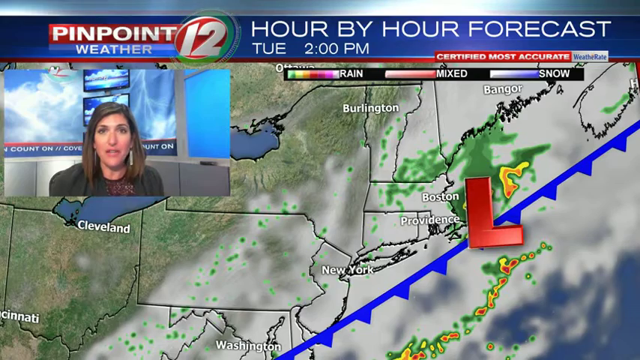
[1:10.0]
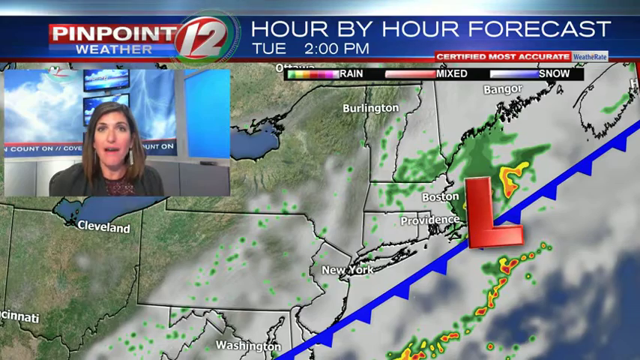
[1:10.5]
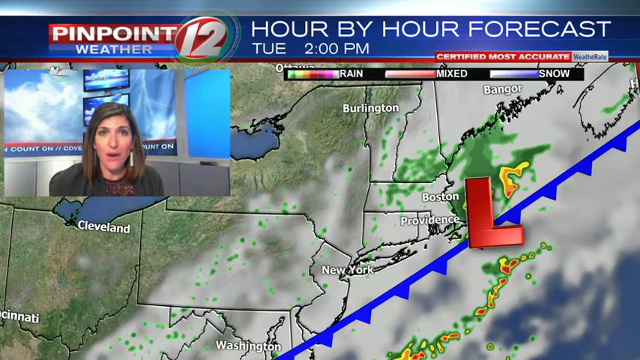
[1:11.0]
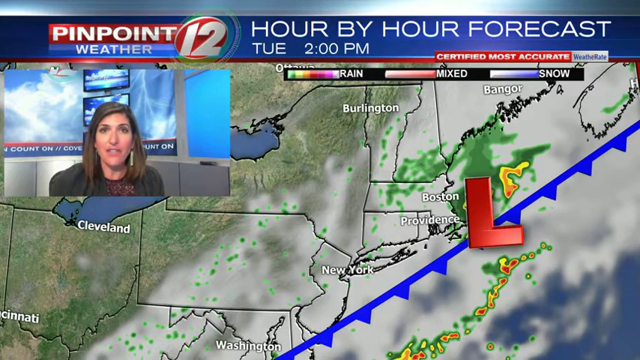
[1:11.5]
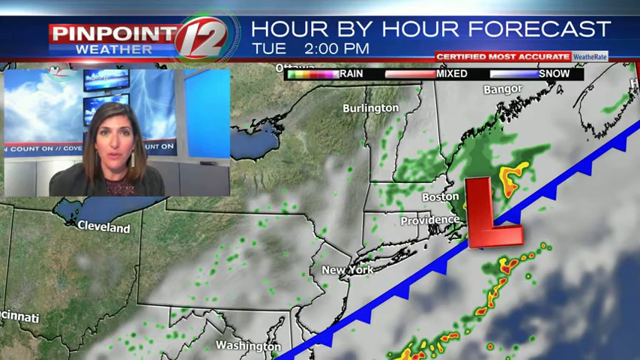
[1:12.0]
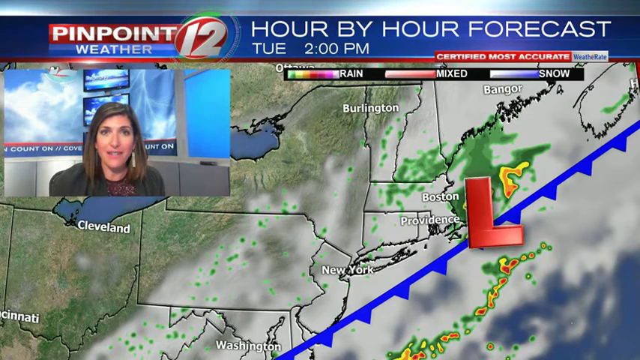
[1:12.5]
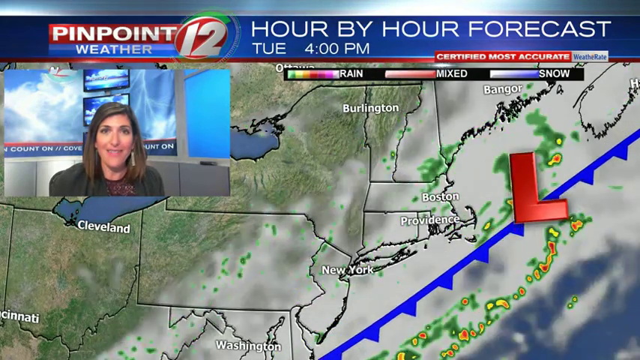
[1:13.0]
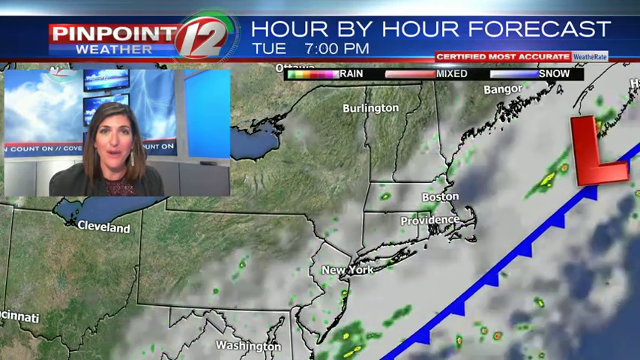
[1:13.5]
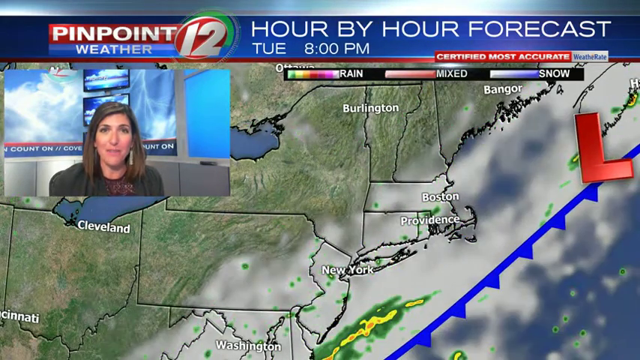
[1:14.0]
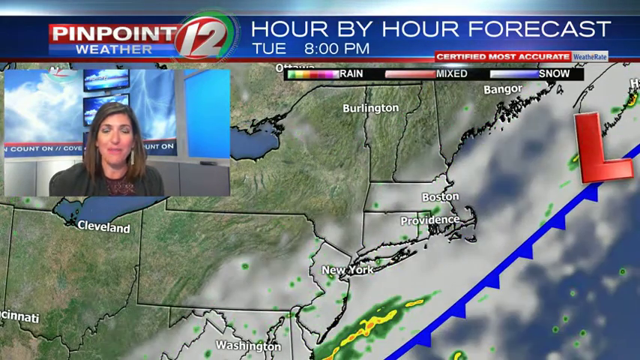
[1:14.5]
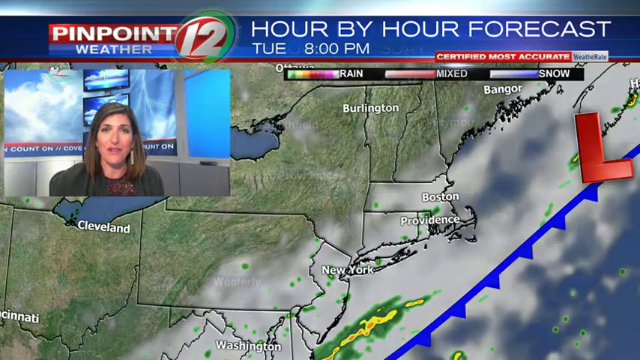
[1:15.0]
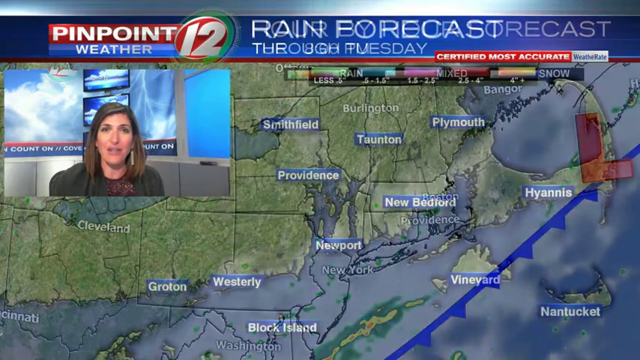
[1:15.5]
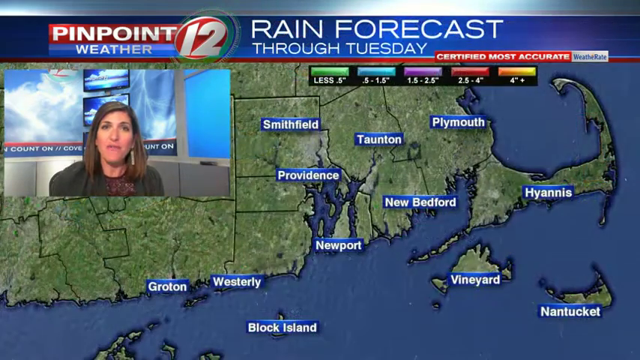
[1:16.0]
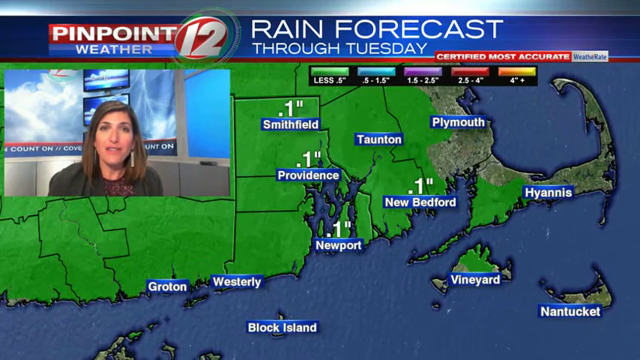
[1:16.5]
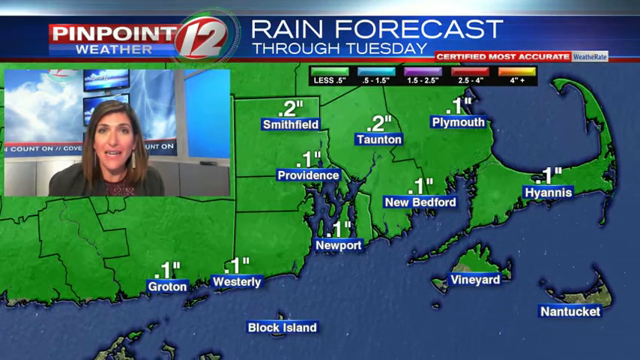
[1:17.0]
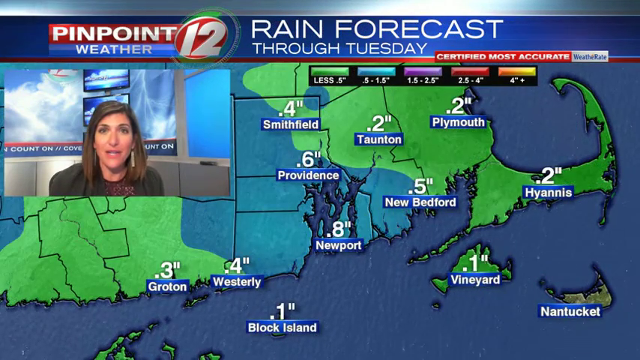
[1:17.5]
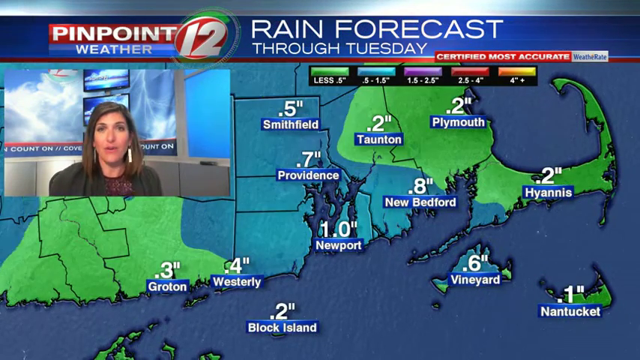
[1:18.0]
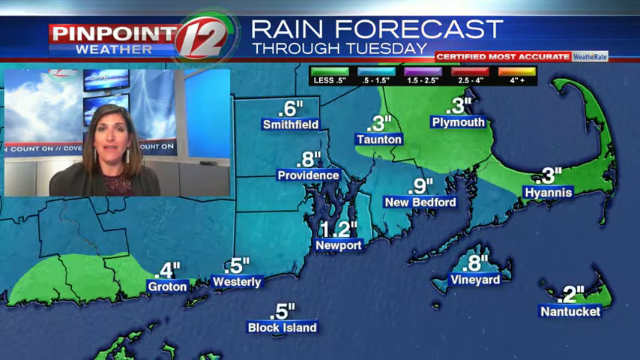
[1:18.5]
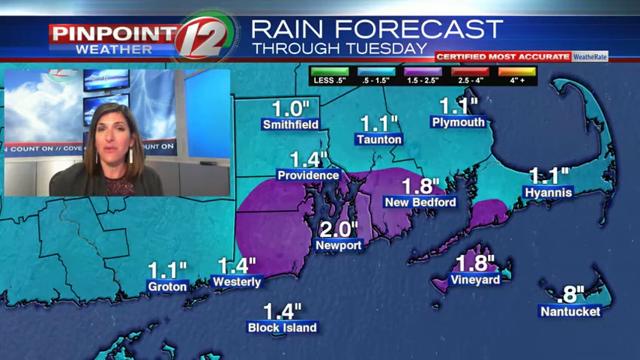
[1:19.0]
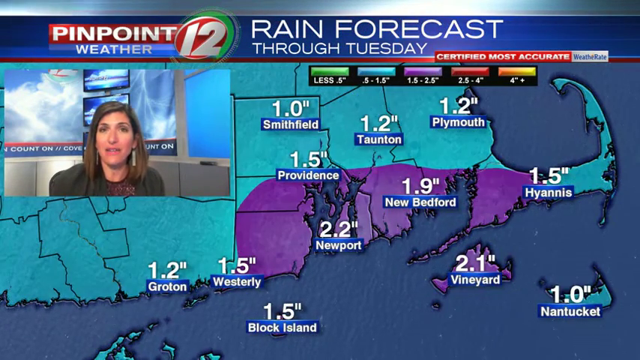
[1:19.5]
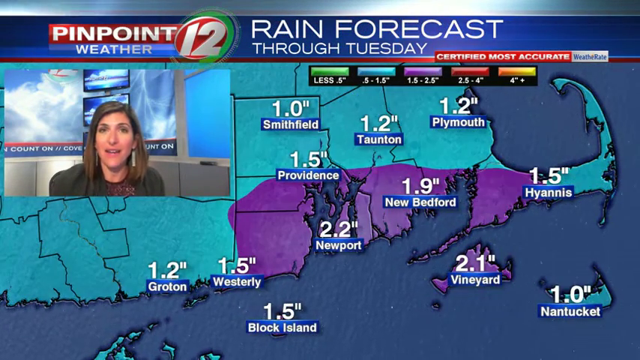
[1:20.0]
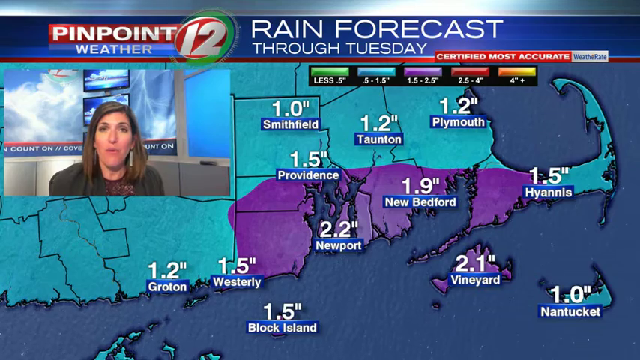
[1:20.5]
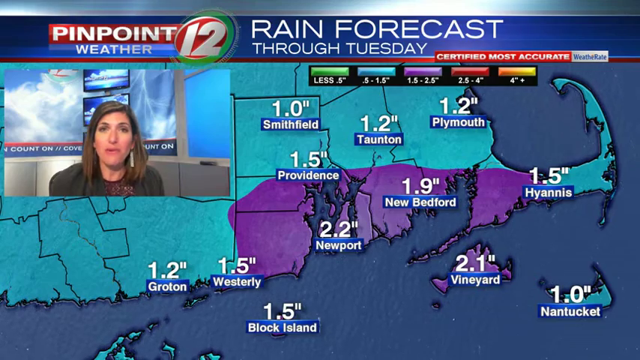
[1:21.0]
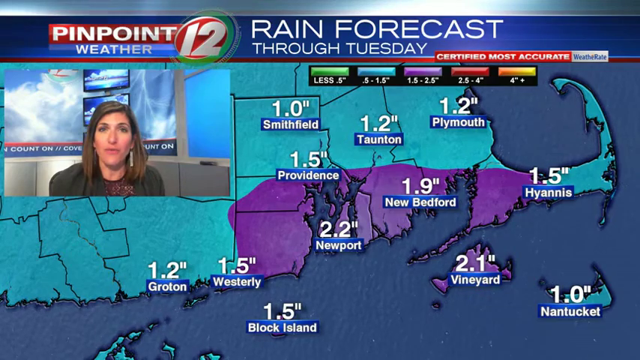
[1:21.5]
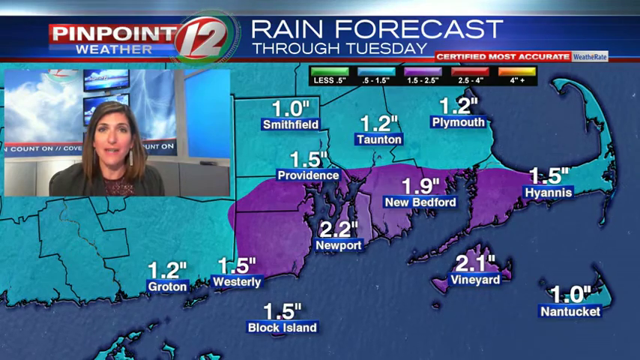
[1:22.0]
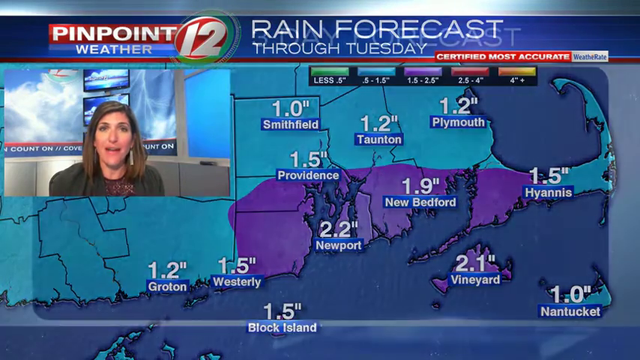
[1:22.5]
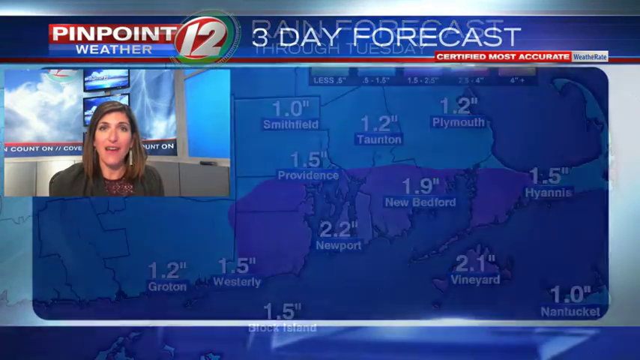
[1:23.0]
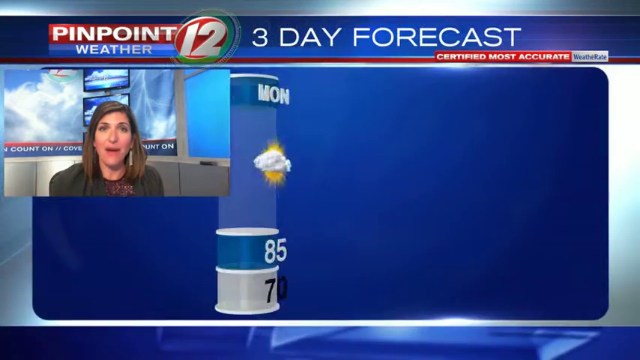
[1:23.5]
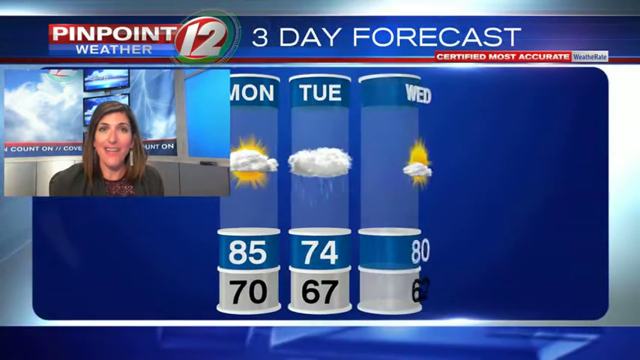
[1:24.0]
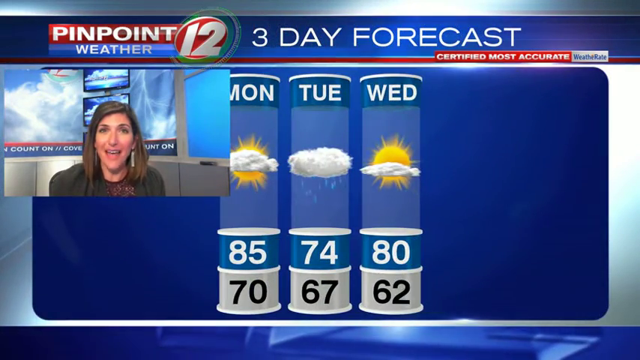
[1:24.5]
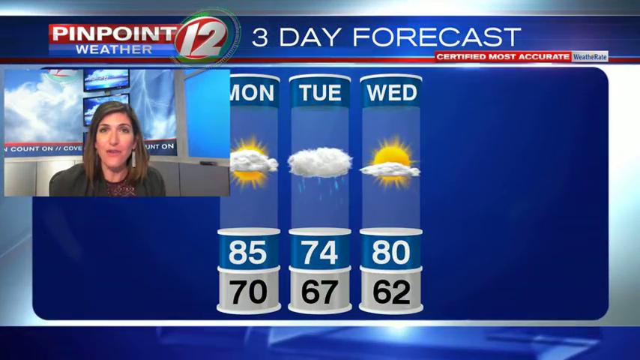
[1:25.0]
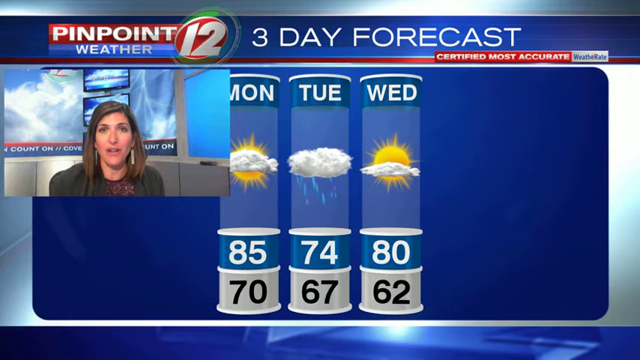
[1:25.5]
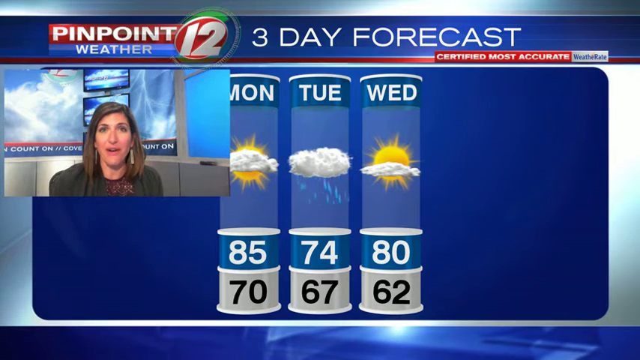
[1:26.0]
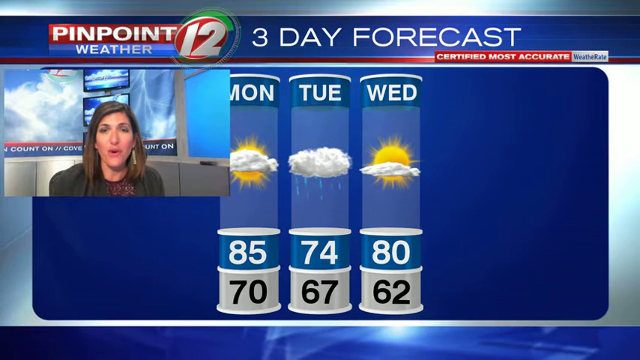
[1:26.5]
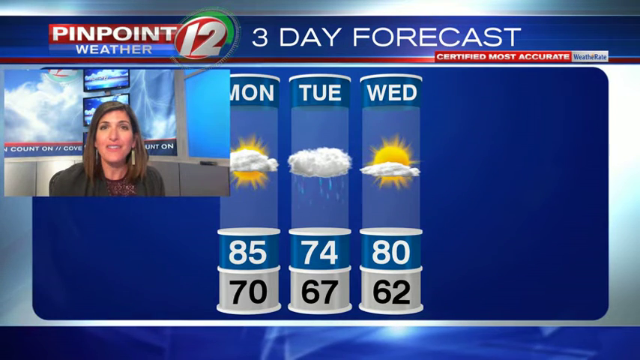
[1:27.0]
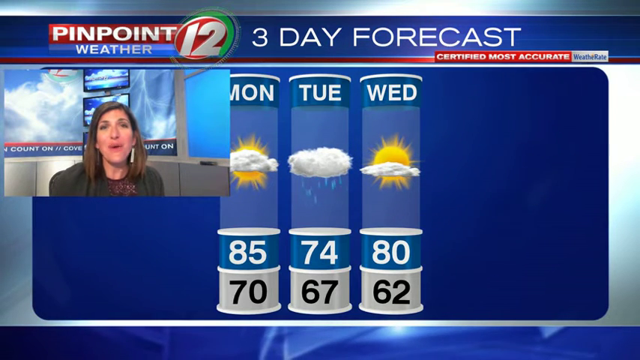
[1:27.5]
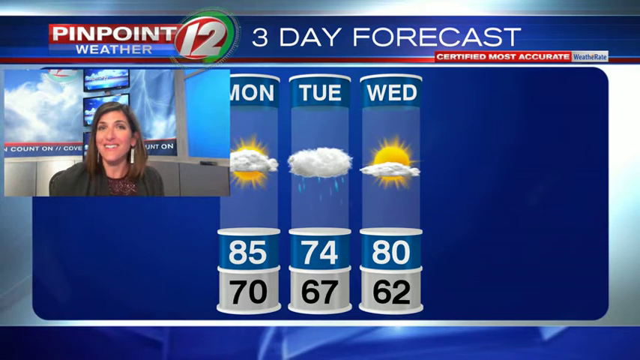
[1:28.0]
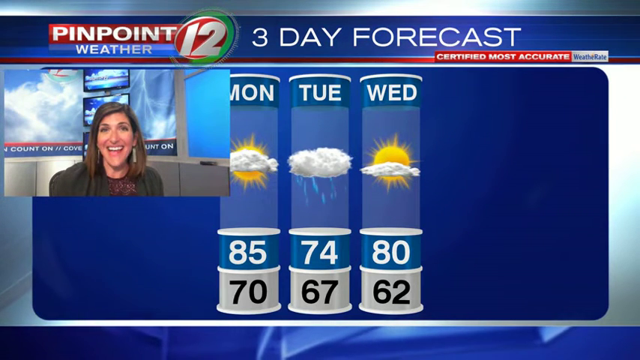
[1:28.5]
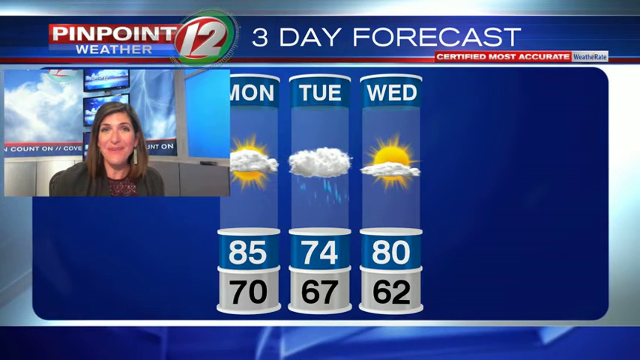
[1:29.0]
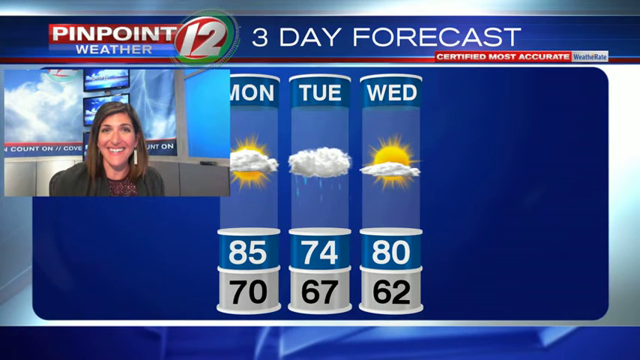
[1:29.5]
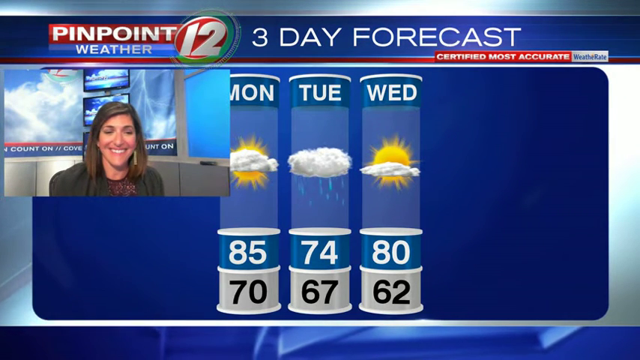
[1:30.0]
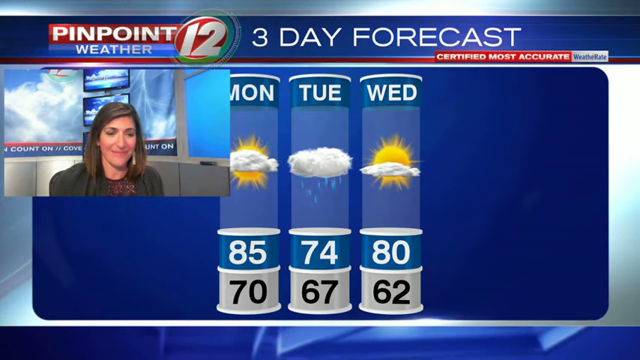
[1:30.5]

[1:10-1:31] The Pinpoint 12 weather broadcast continues with the lady meteorologist still in the frame in the top left. The hour-by-hour forecast is now on Tuesday 2pm, with color codes for rain, mixed and snow, and the big bold red L is on the ocean. Cleveland is clear and part of Burlington is clear, while a cloudy, mesh-like feature covers New York, Boston, Providence and Bangor. The greenish and yellowish areas now cover the beach and the ocean. A rain forecast follows, with color codes for different levels of rain. The map is green in one part and clear in the other, then turns green everywhere. Green means less than 5 inches, and blue is between 5 inches and apparently 15 inches. A 3-day forecast from Monday to Wednesday then appears: Monday 85, 70, sunny and cloudy; Tuesday 74, 67, cloudy and rainy; Wednesday 80, 62, cloudy and sunny.